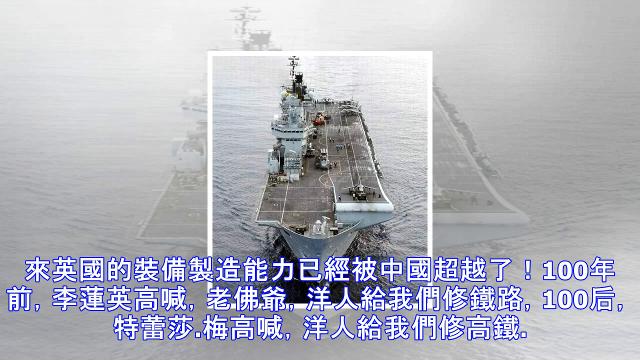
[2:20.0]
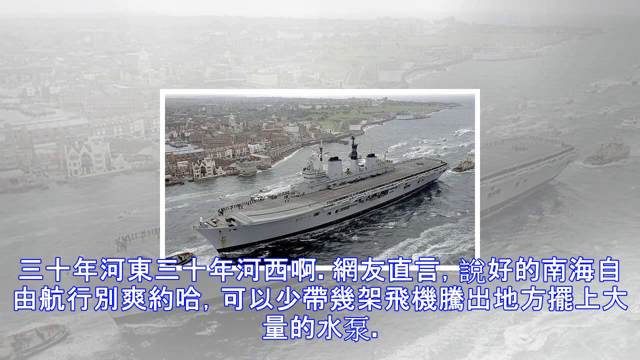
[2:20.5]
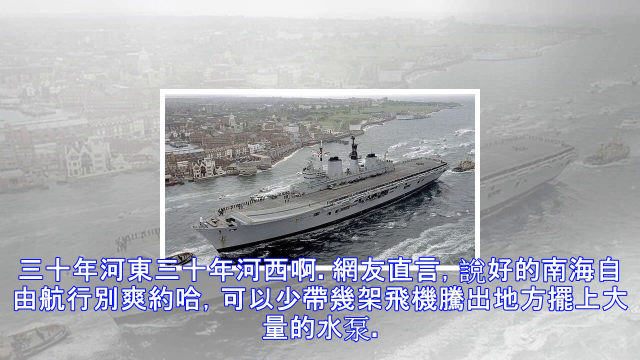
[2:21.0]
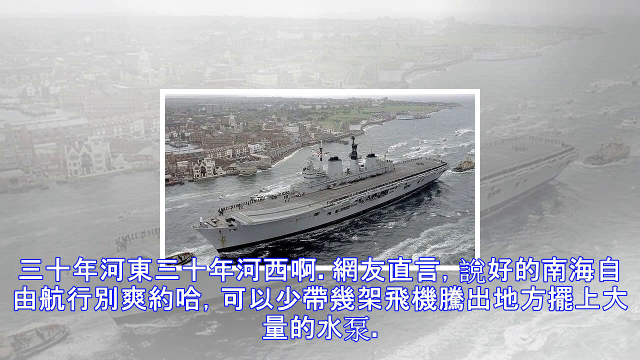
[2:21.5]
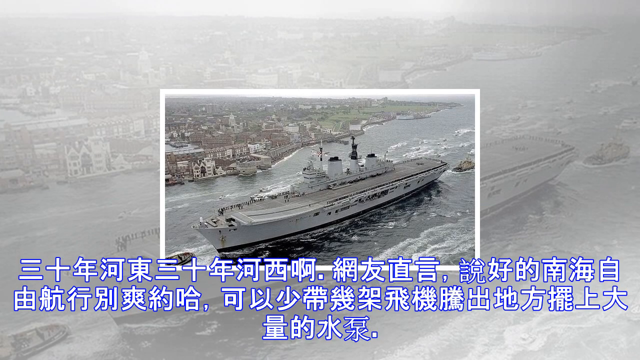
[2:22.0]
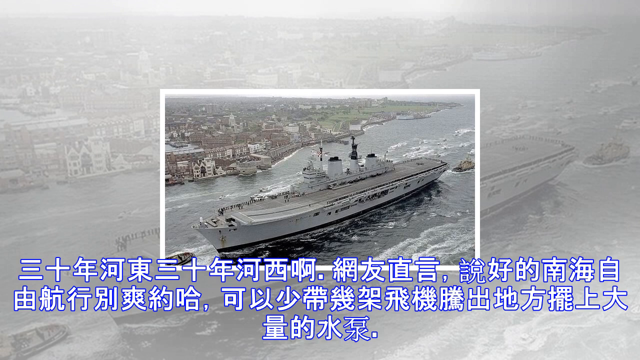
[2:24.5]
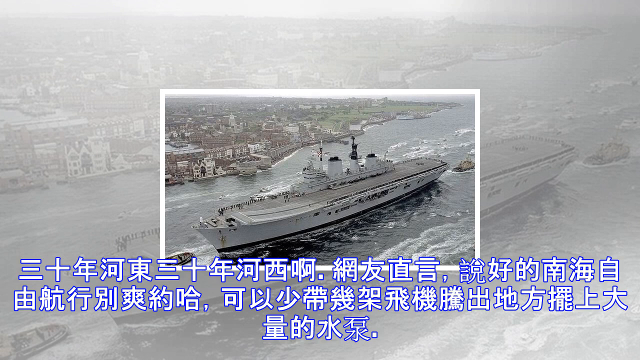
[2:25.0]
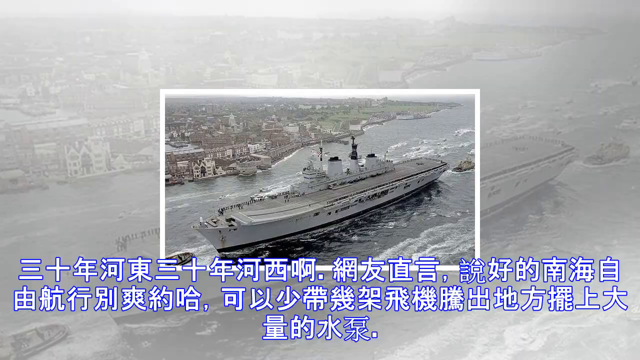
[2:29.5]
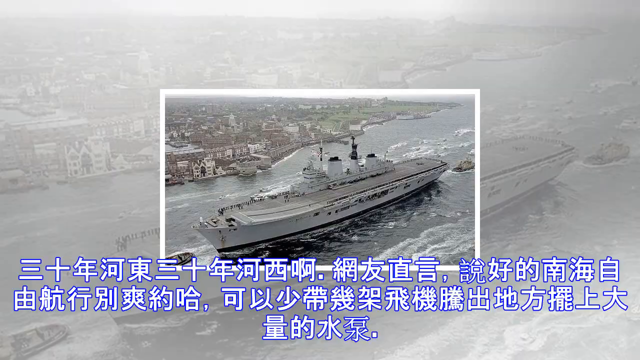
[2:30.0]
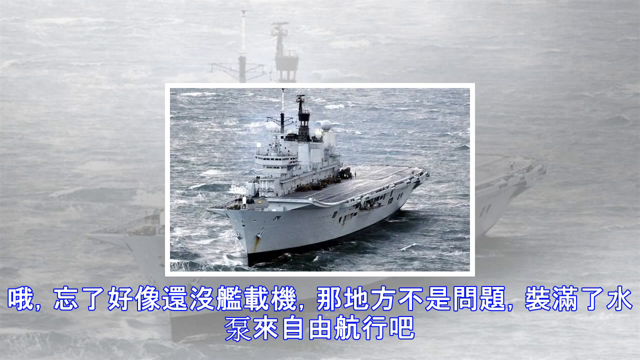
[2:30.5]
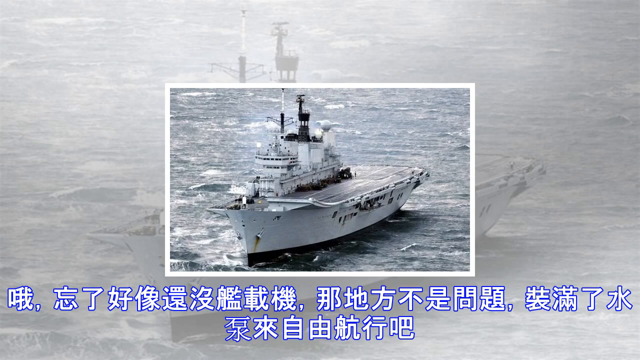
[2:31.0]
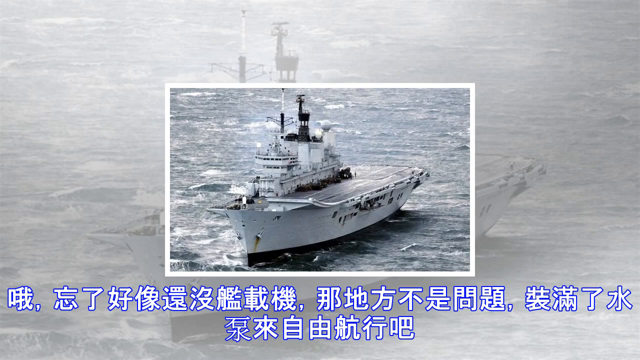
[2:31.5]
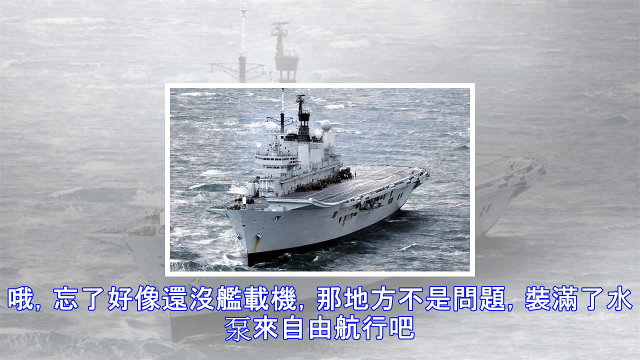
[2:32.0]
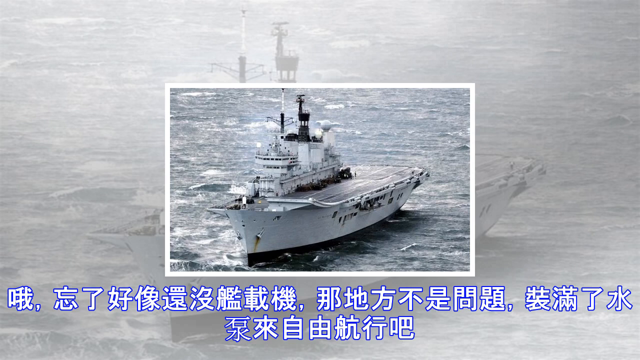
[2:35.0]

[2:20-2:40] The picture of the vessel going through the town is shown again, with tugboats in the front and the back. There are many waves on the ocean, and the sky around it looks very cloudy. Some people are on the outside of the vessel. The vessel is white with rust on the front, two smokestacks, a couple of antennas, and a tower for the planes coming in to land. The town it is passing has numerous buildings on the side, and there is green grass at the opening next to the ocean. Chinese text is below. The next vessel, shown before, is out in the middle of the ocean. It is white on the side and seems to be dirty, showing some black and some rust. There is a small landing area on top of the vessel. It has a radio tower, a top section with a smaller section below it that has numerous windows, a big antenna on top, and two smokestacks behind this.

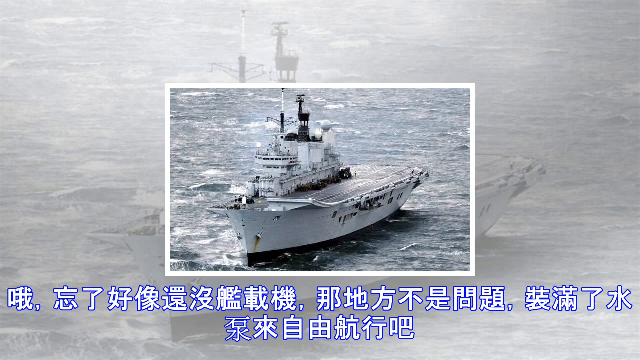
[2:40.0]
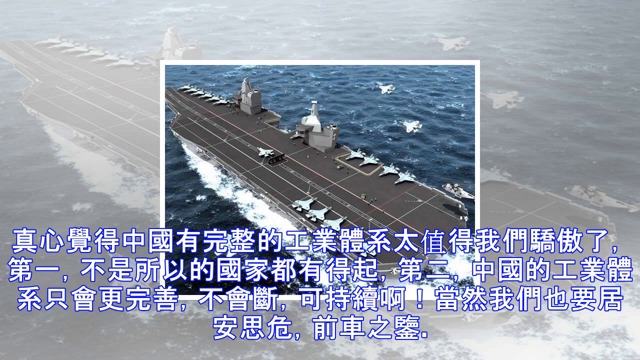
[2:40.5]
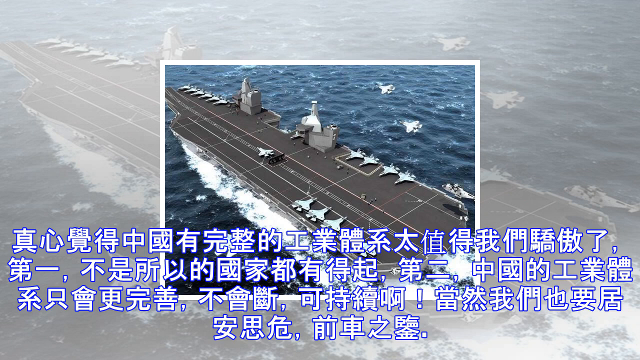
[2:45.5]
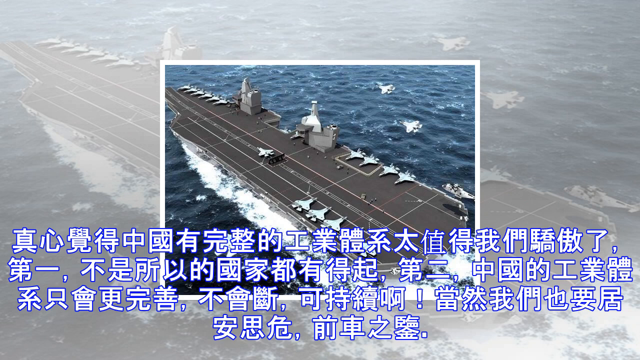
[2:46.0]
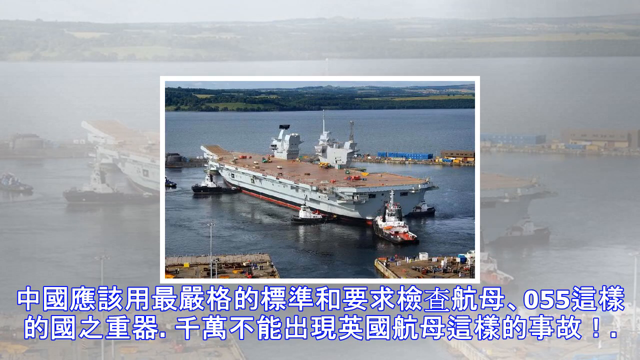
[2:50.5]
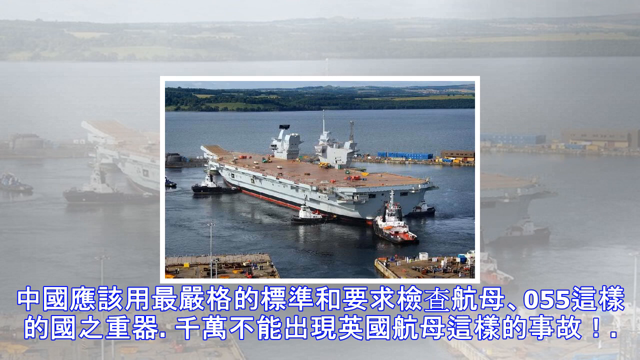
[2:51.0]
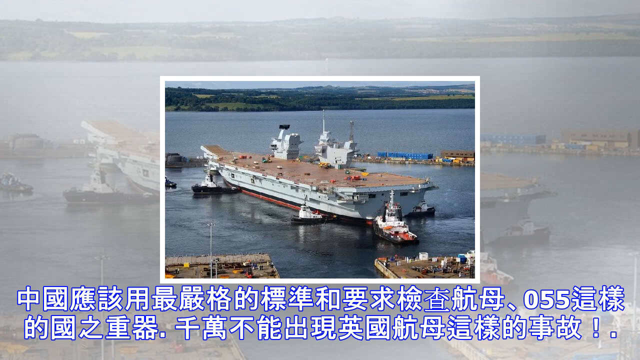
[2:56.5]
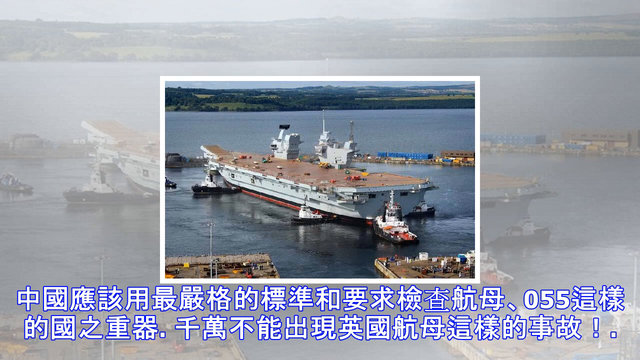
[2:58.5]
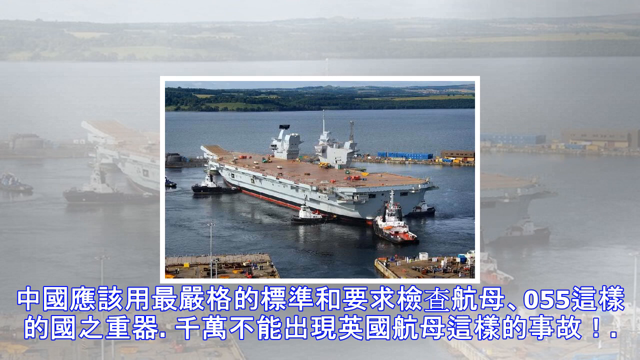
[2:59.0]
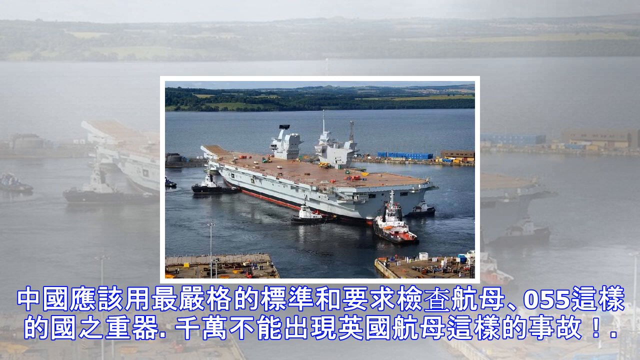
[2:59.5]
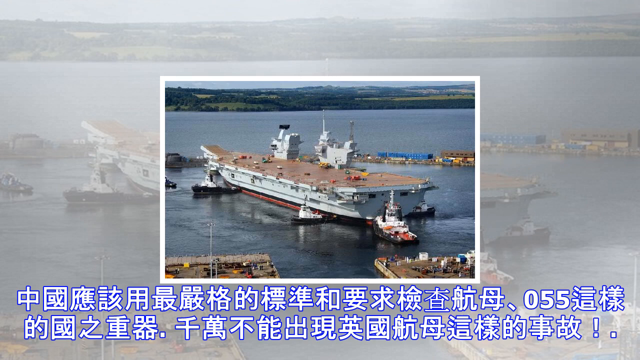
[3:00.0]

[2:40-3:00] The same pictures repeat. The vessel out in the ocean again has numerous fighter jets on top: six white ones in the front, four in the middle of the side, and five across from these. A fighter jet about to take off is in the middle of the vessel, and another fighter jet is flying next to the vessel. The vessel is floating in the ocean and appears to be moving quite fast, with white water around it. The ocean is a very dark blue. The next picture shows tugboats around a vessel, helping it either get out of the area or park. This vessel is mainly white, with a radio tower towards the front, two antennas, and a control tower area. Around this area are numerous houses or buildings. On the island there are some either blue buildings or containers, and next to that is a brown building with many windows. In the background are green hills and dark green trees.